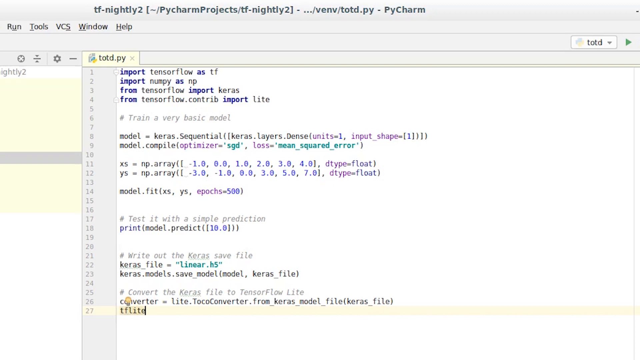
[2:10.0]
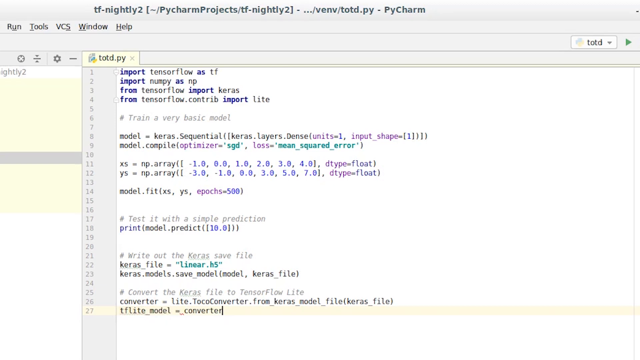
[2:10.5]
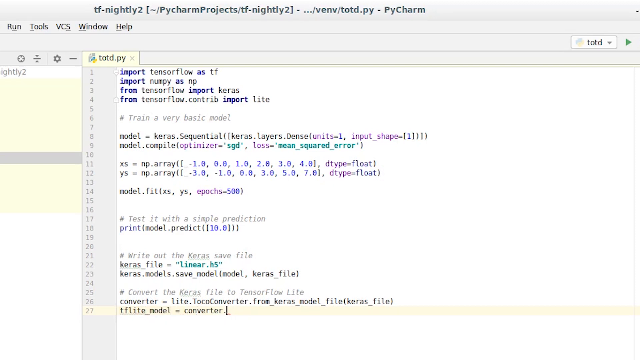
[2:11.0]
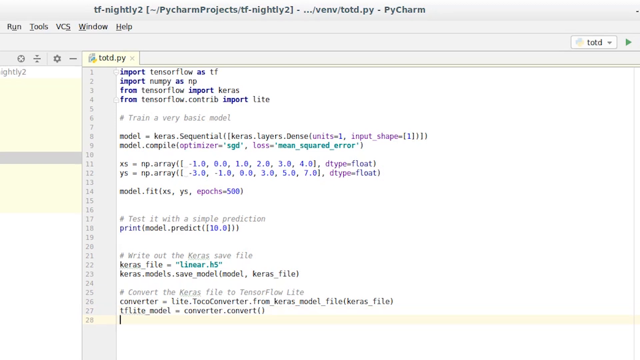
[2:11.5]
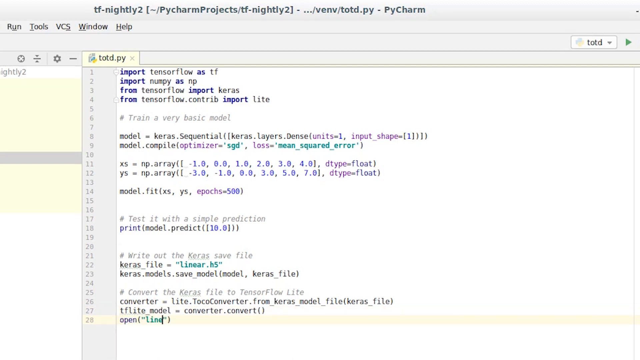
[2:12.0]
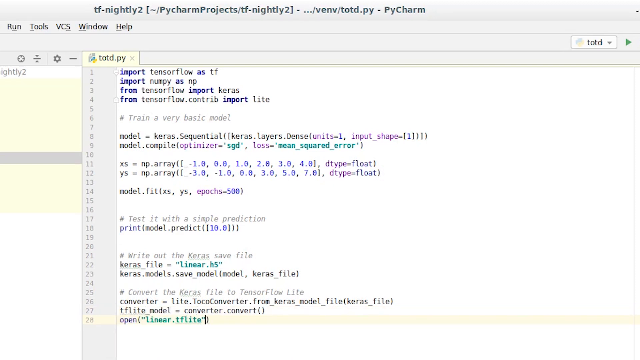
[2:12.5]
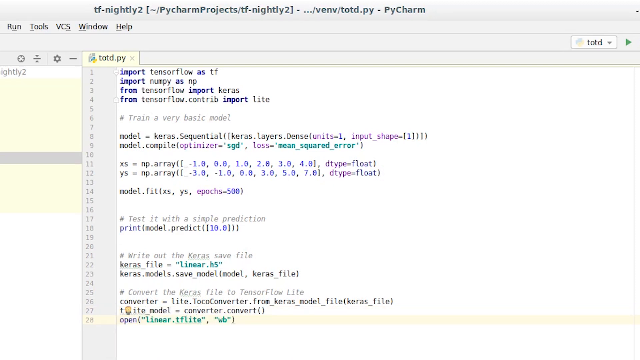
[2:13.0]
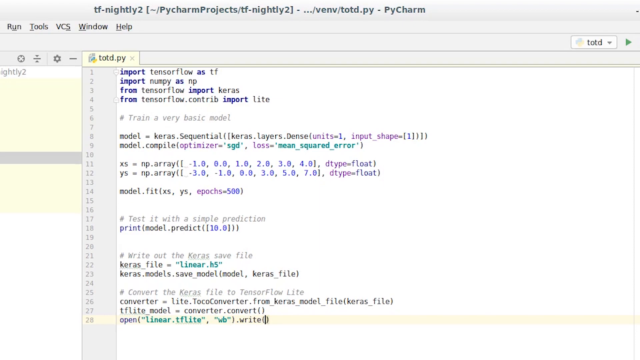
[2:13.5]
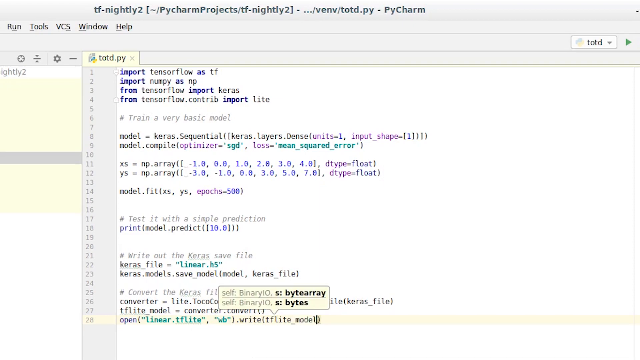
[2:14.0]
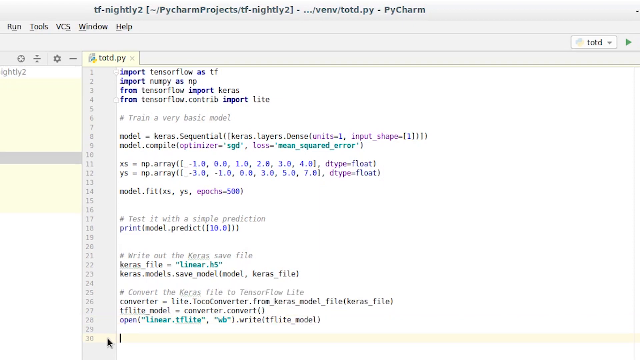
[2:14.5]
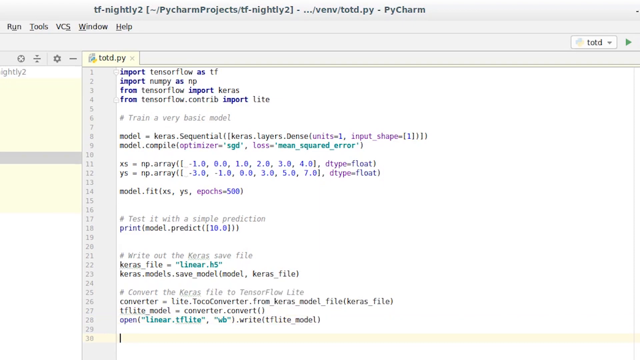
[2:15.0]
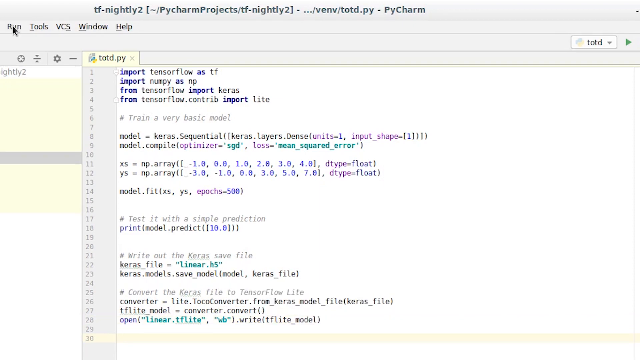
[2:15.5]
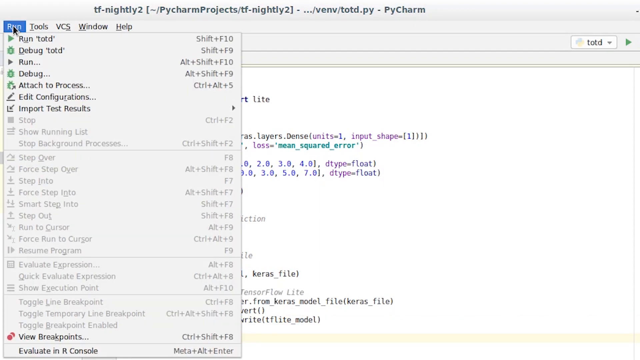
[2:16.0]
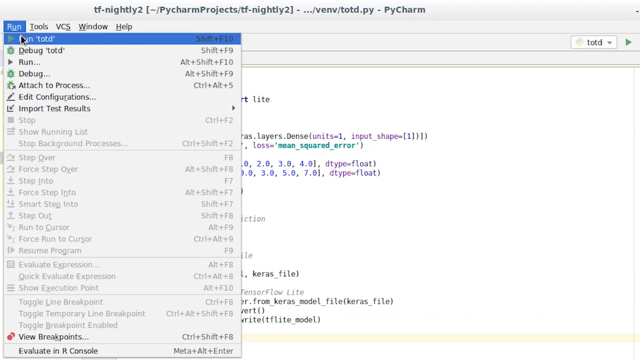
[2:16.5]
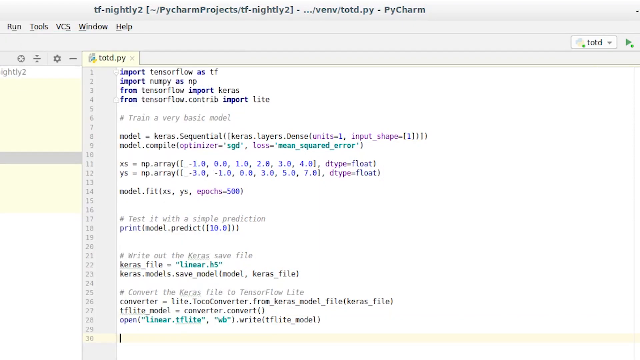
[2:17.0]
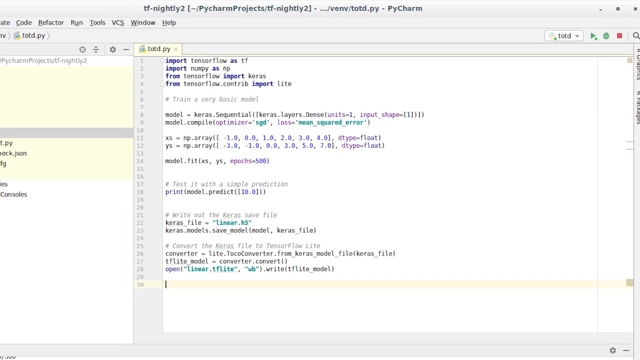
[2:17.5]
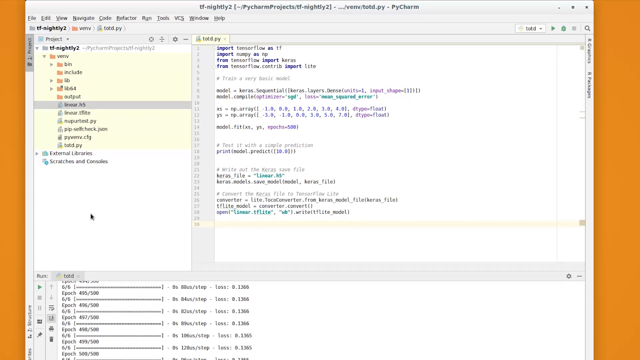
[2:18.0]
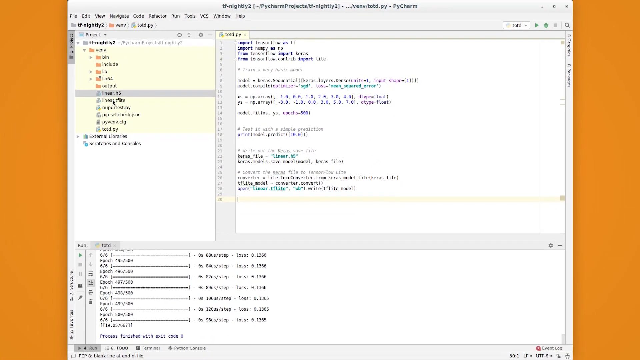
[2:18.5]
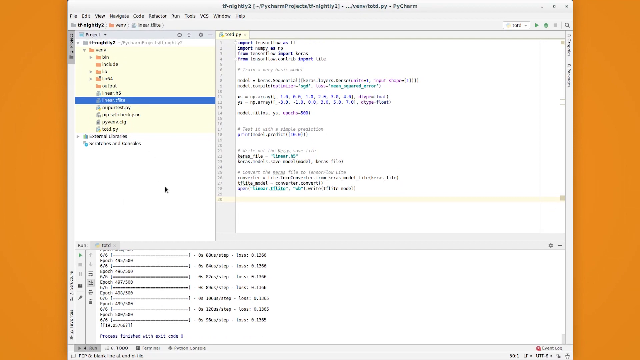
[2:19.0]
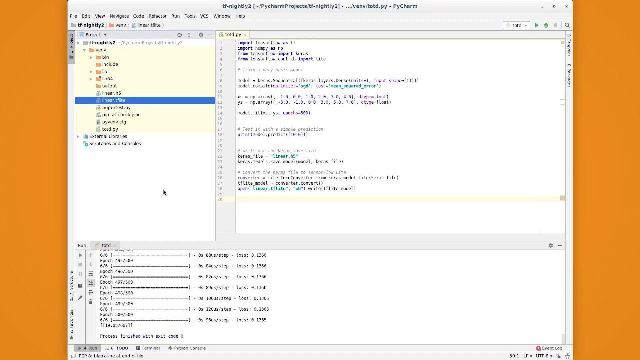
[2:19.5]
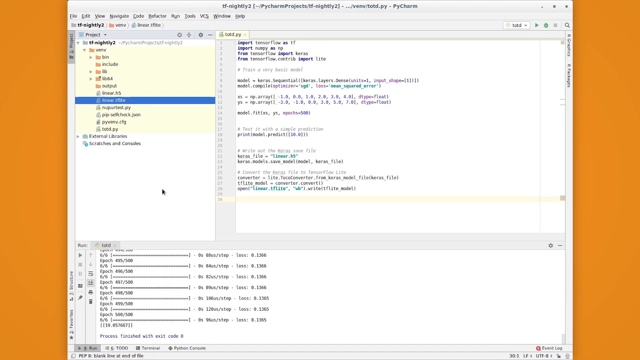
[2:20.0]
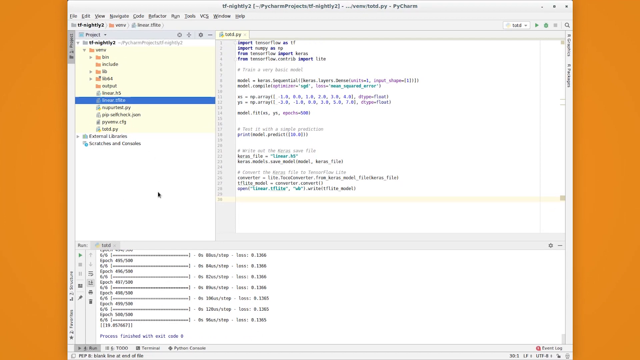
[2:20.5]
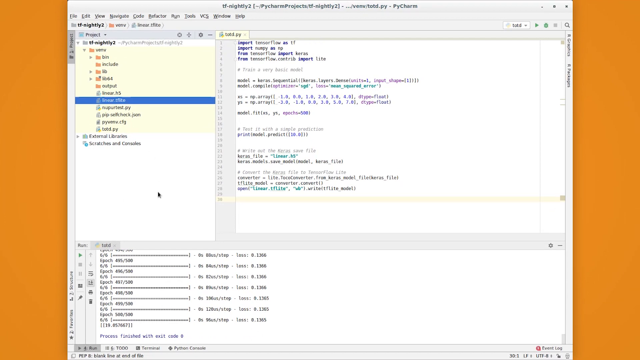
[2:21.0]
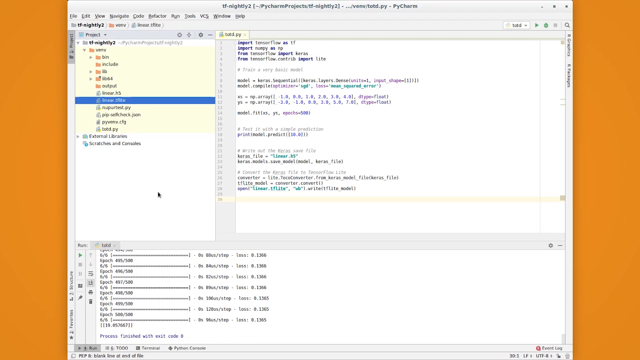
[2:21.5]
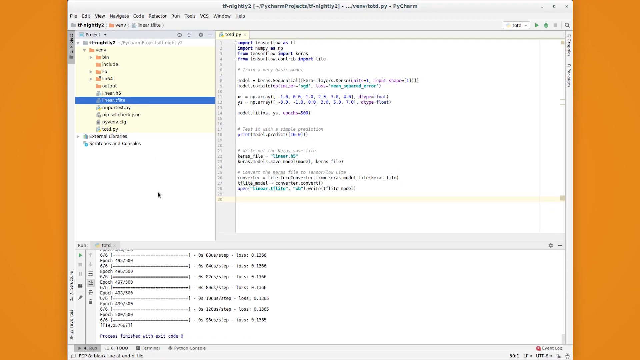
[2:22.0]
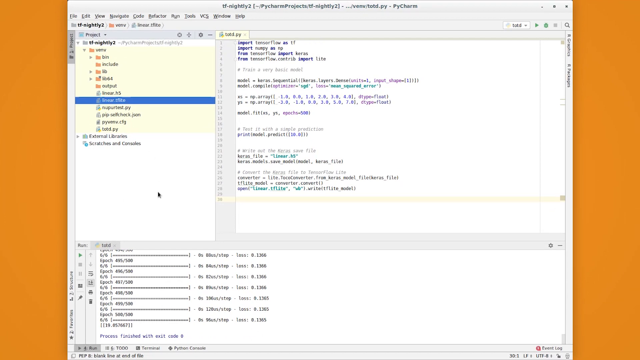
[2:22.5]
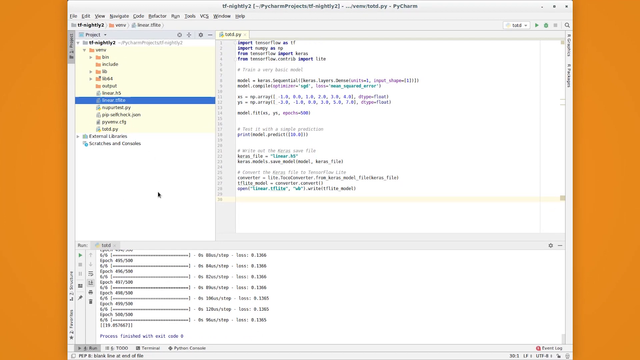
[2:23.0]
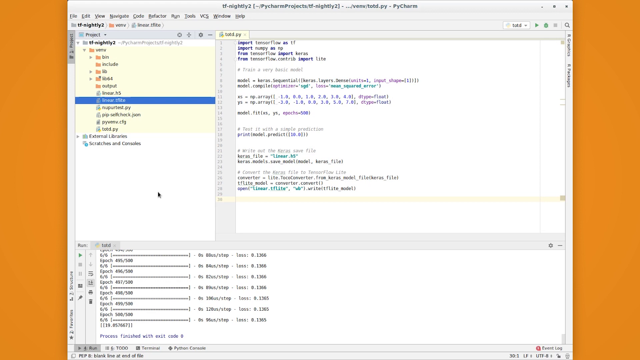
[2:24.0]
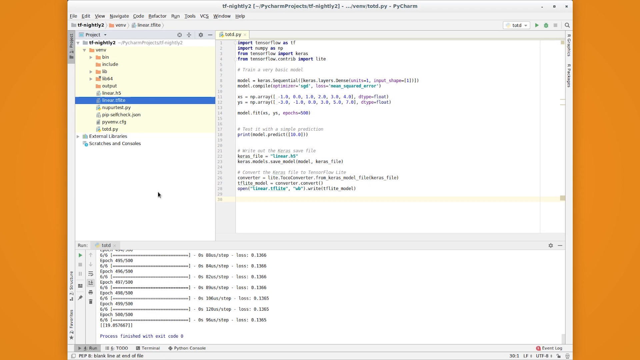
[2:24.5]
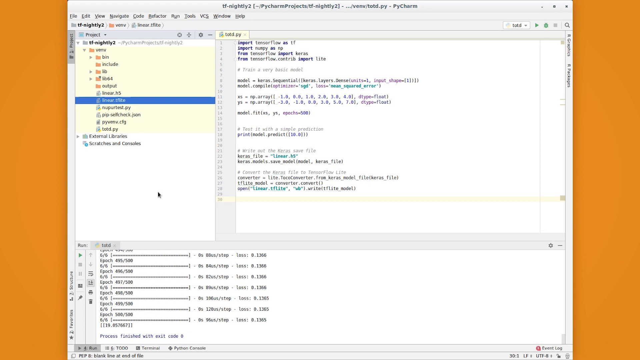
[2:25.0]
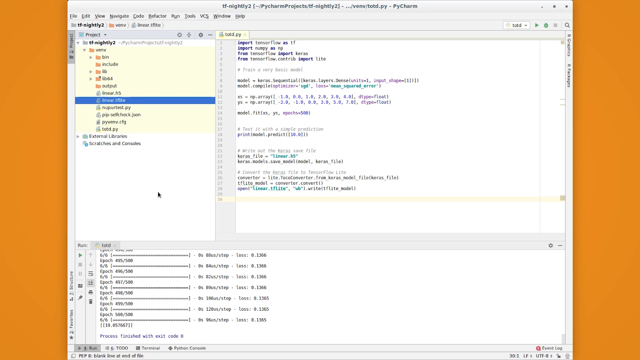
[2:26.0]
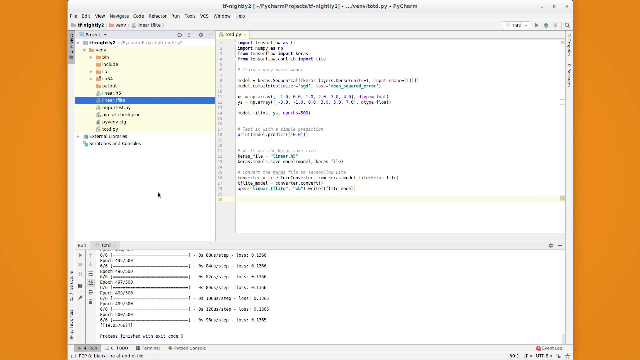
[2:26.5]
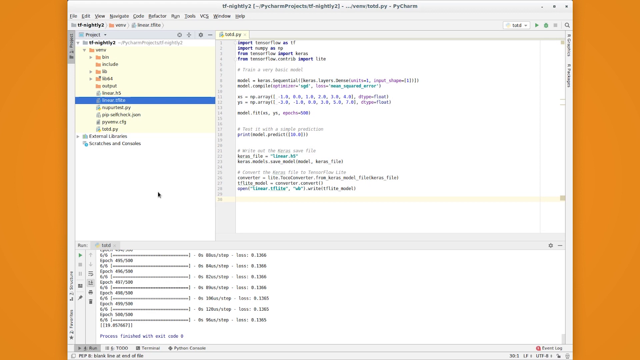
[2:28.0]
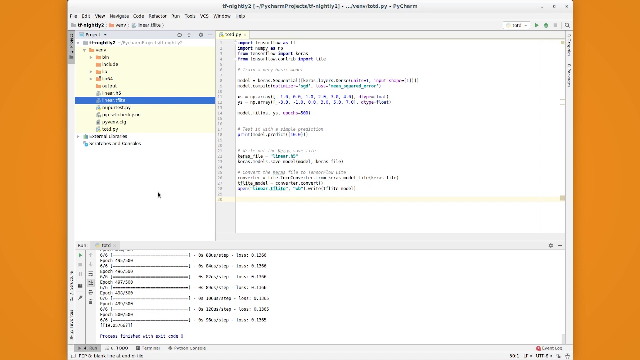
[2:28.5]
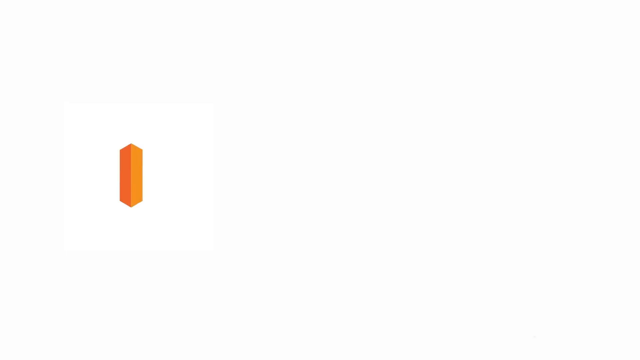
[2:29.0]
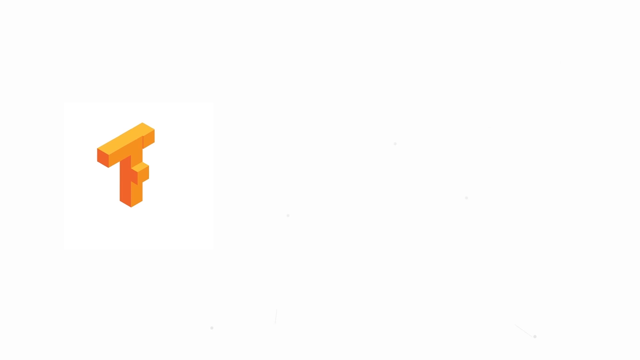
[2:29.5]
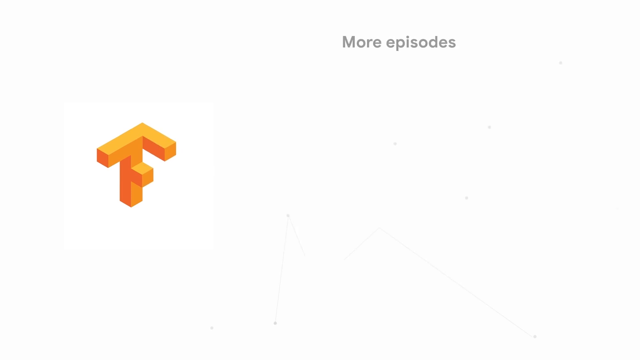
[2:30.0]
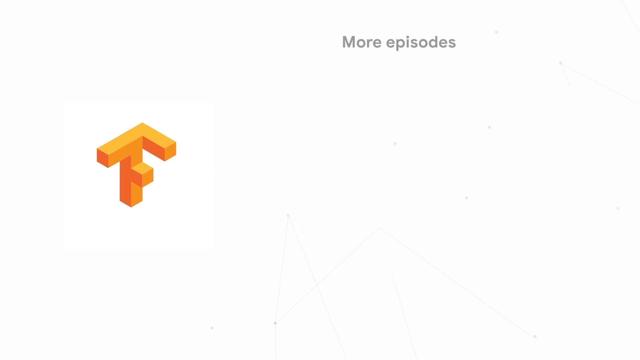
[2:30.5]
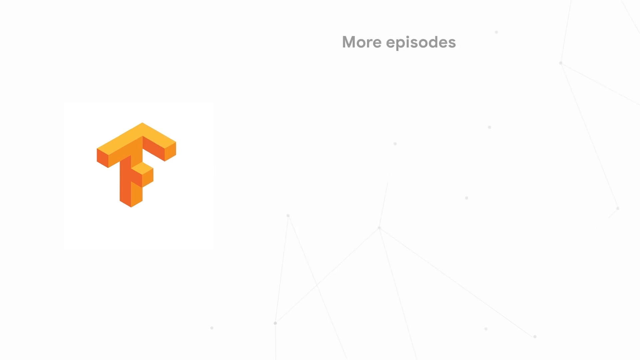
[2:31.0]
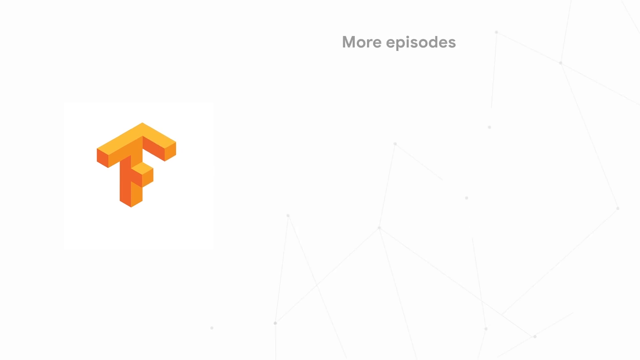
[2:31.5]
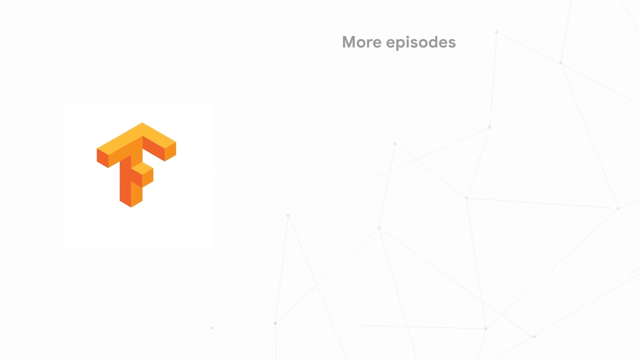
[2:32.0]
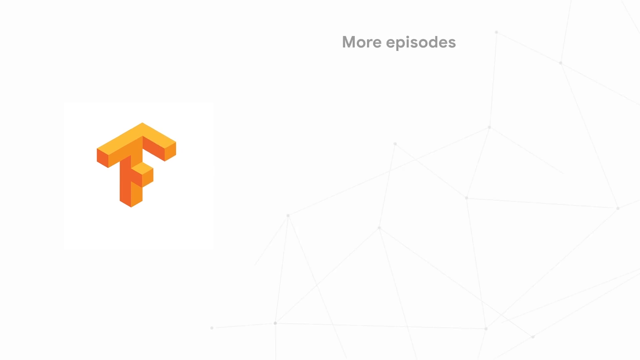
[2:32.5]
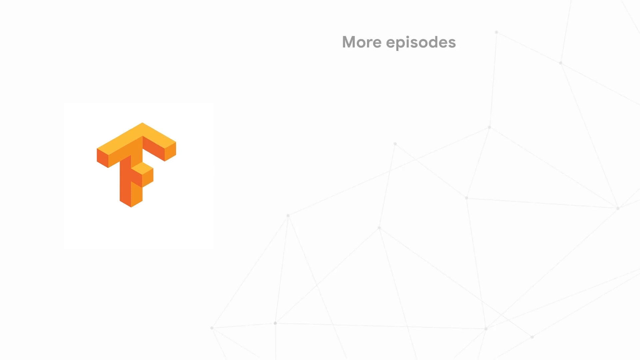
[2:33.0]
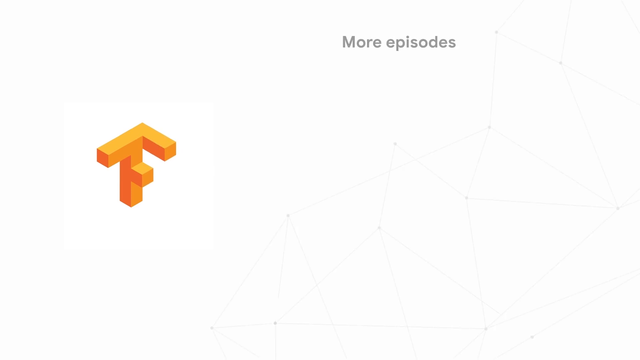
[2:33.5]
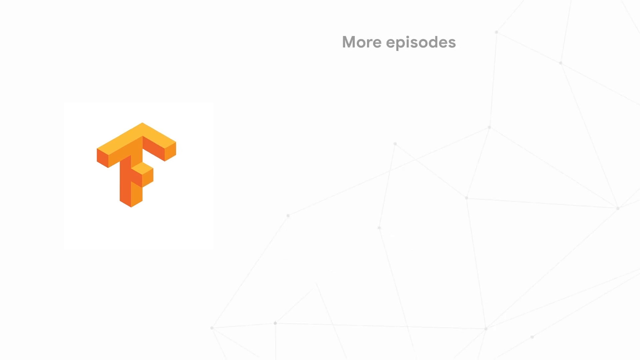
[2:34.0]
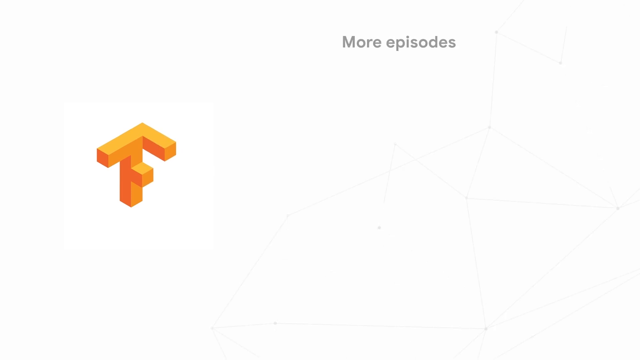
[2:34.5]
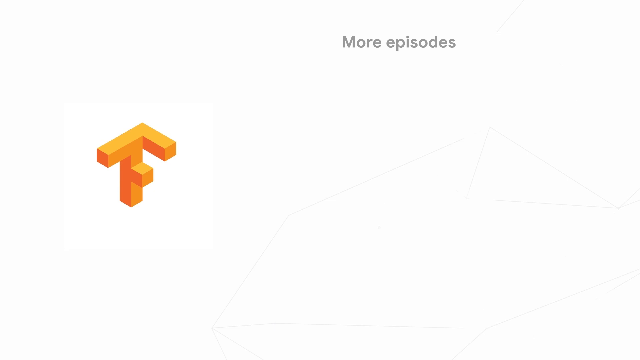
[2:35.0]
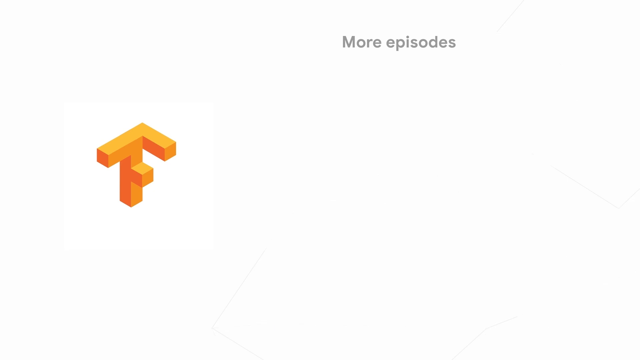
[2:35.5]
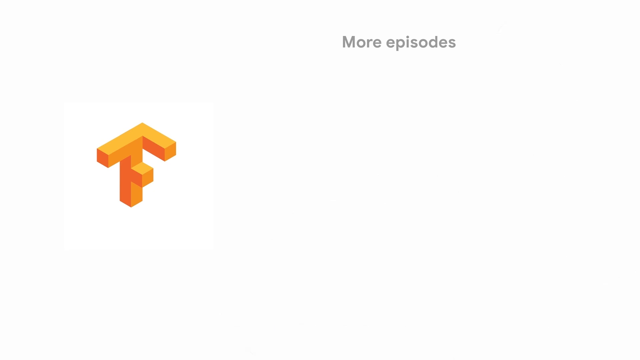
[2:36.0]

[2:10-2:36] The document page labeled "TF Nightly 2" shows "import tensorflow as tf," "import numpy as np," "train a very basic model," "test it with a simple prediction" and "write out the Keras save file." Someone appears to be typing code to test it through a model. A "run" option is used and the code runs, but nothing visibly happens on the screen and the cursor does not move. Finally, text about more episodes appears on a white background with a small orange figure.